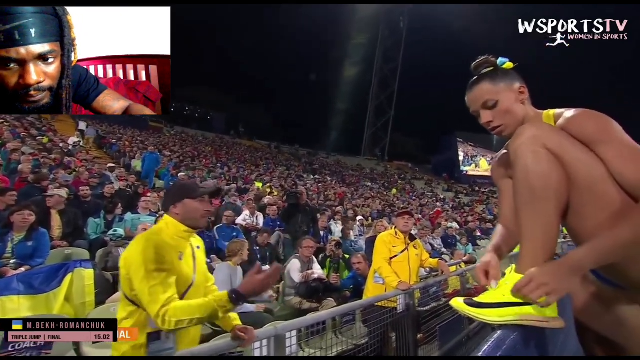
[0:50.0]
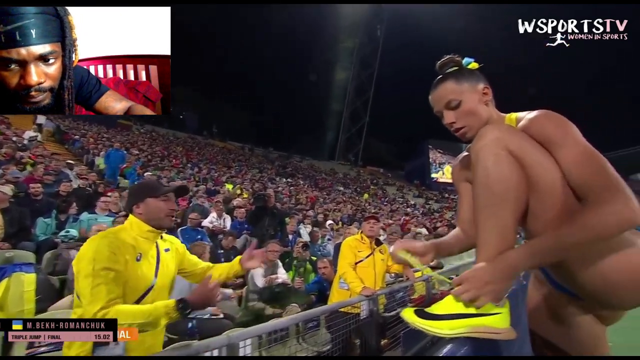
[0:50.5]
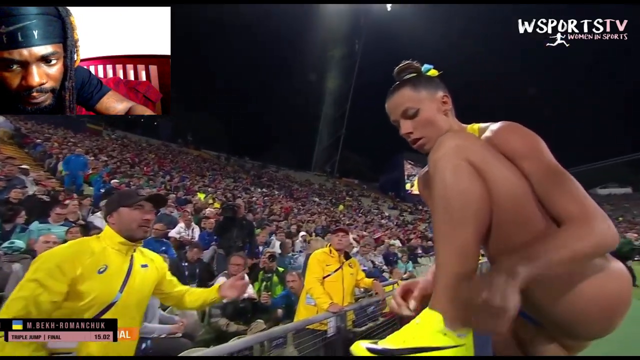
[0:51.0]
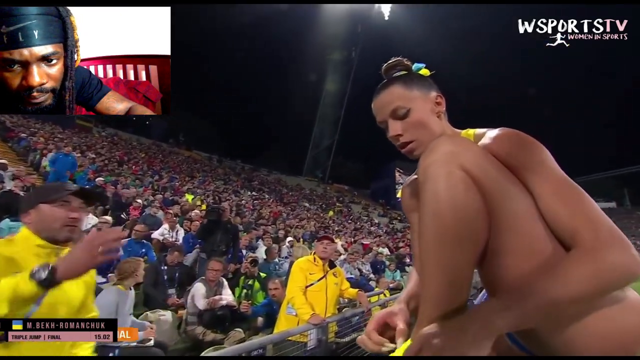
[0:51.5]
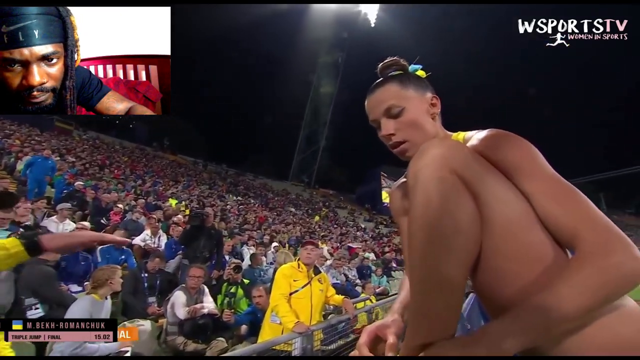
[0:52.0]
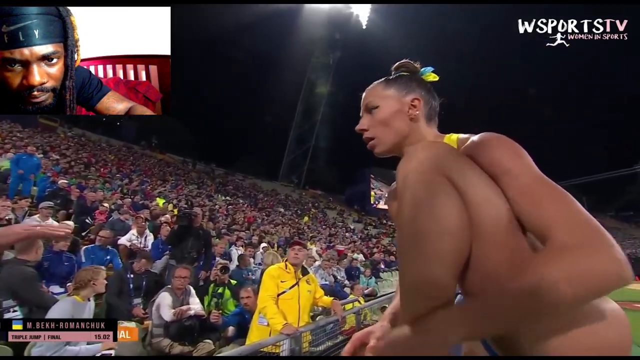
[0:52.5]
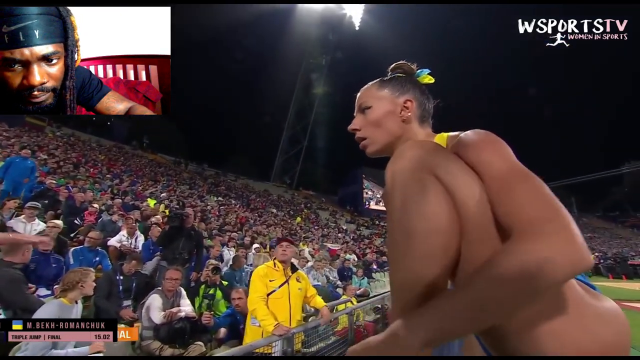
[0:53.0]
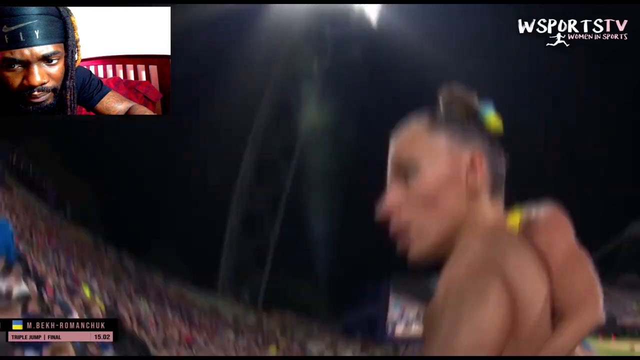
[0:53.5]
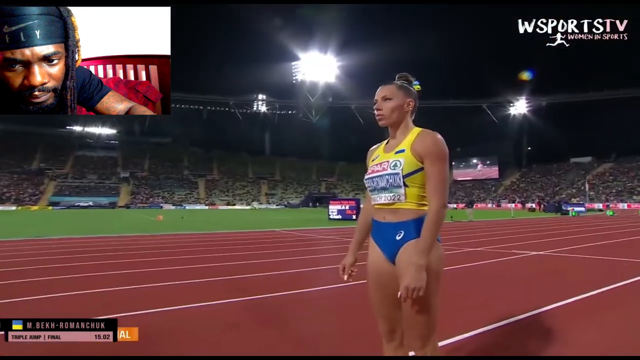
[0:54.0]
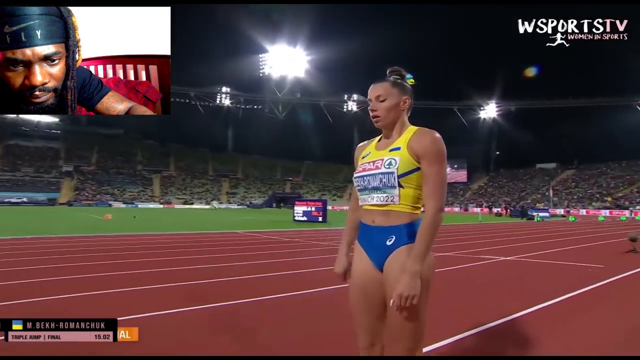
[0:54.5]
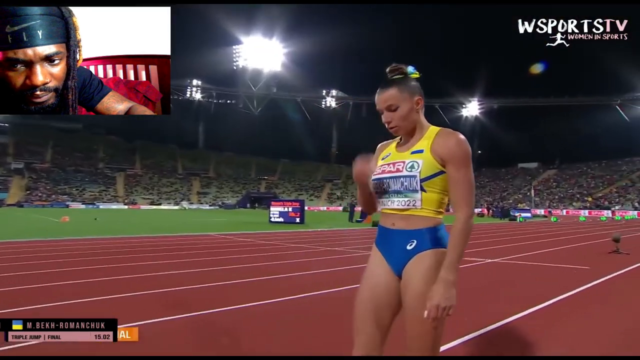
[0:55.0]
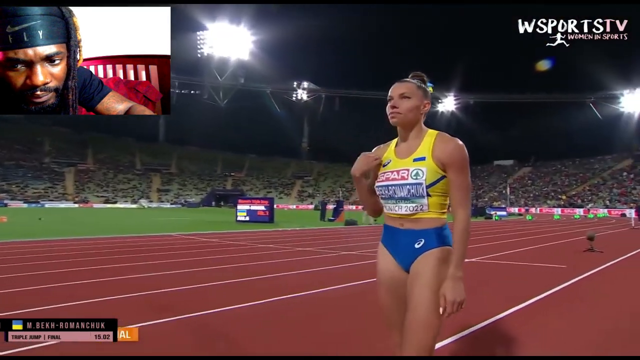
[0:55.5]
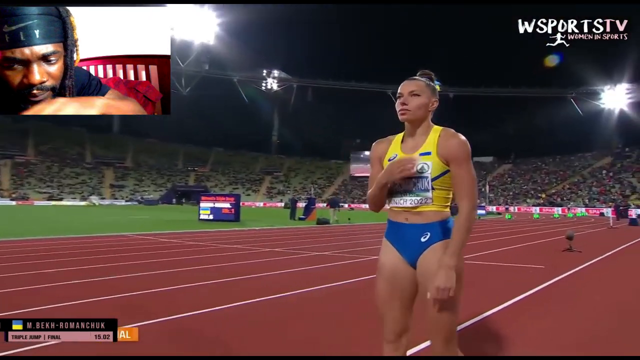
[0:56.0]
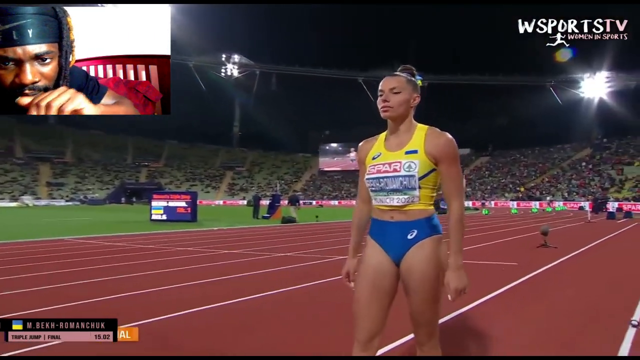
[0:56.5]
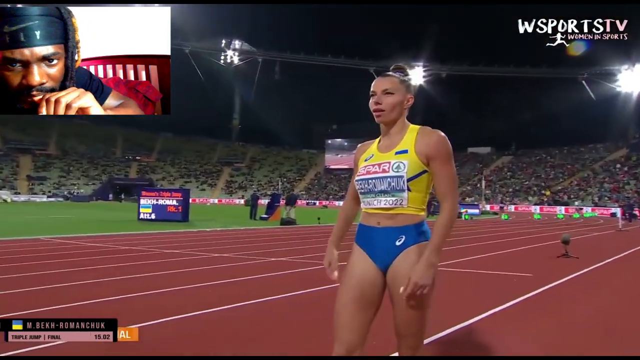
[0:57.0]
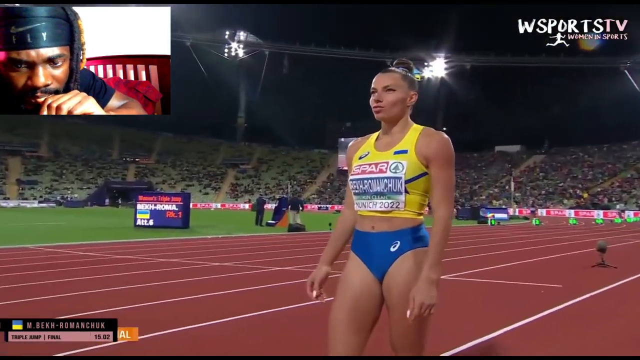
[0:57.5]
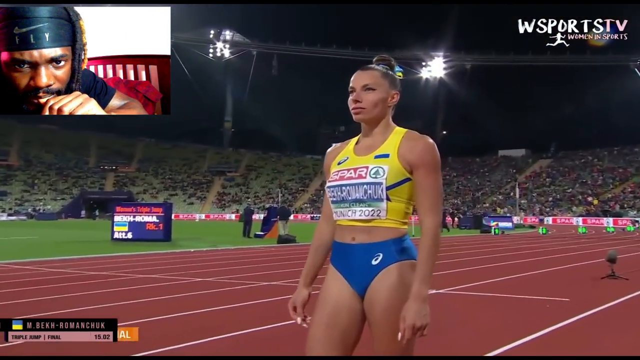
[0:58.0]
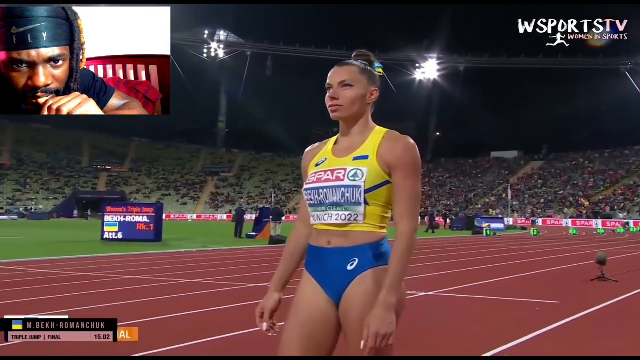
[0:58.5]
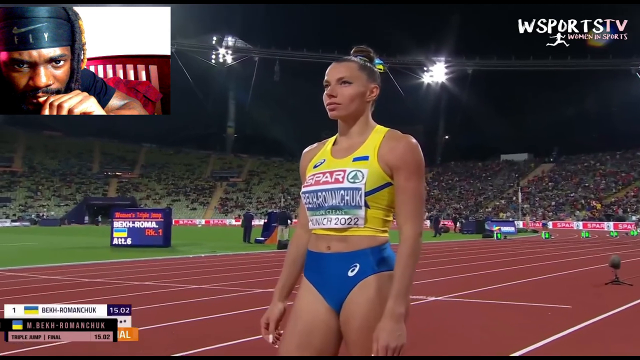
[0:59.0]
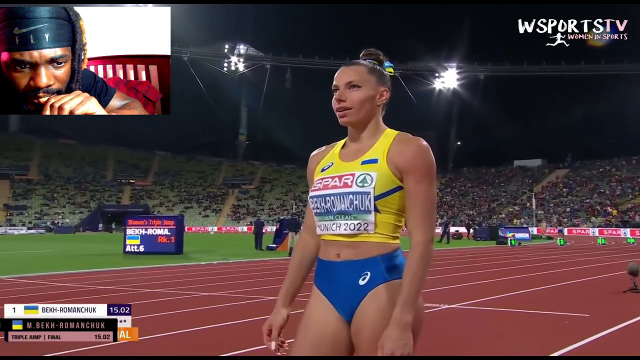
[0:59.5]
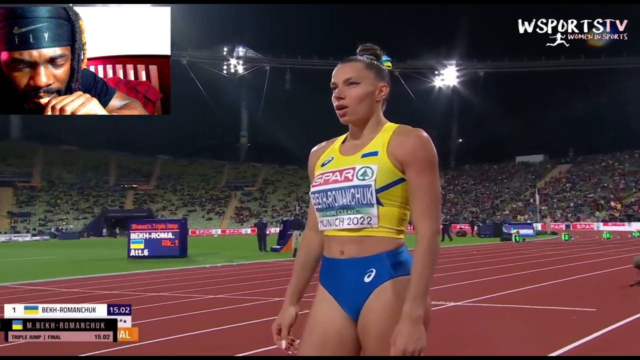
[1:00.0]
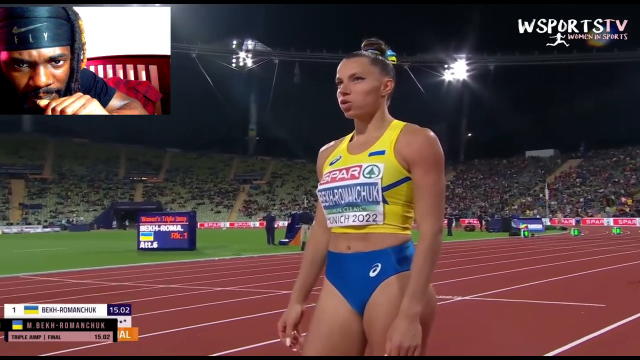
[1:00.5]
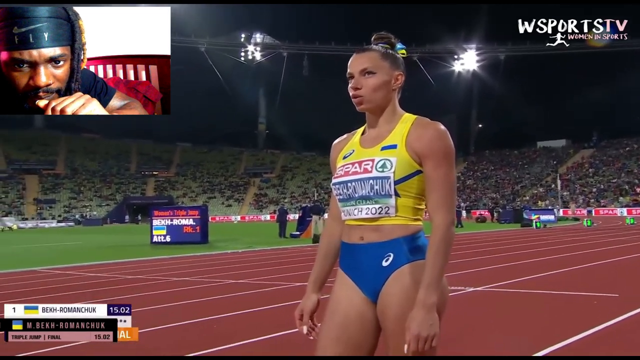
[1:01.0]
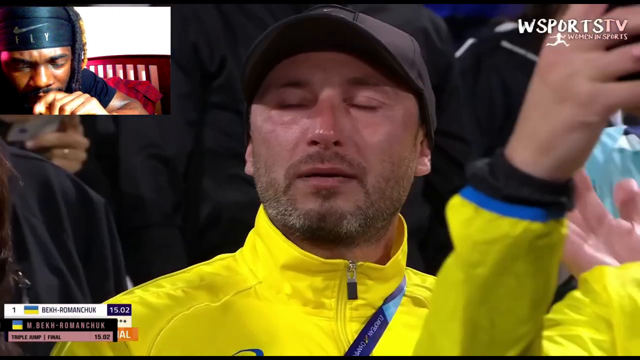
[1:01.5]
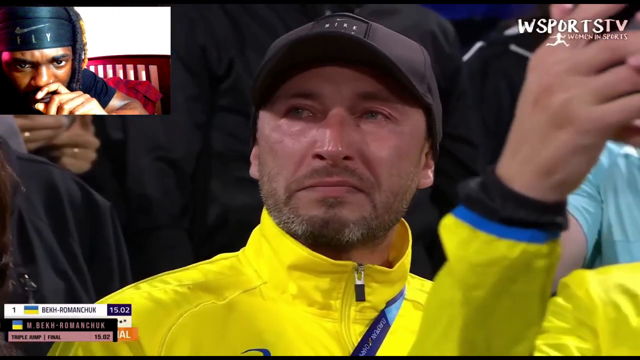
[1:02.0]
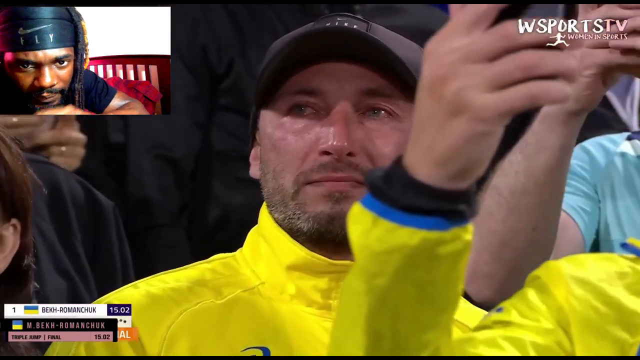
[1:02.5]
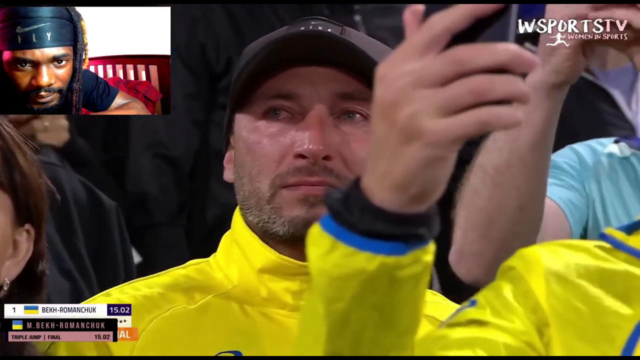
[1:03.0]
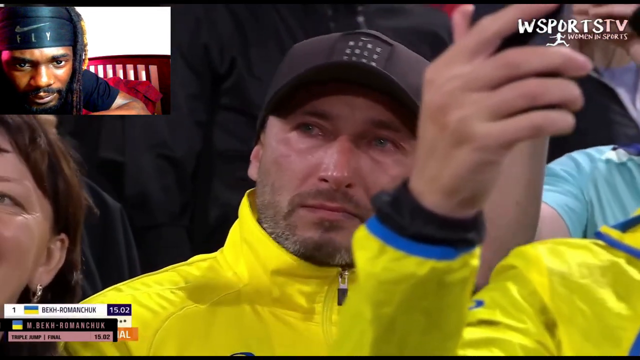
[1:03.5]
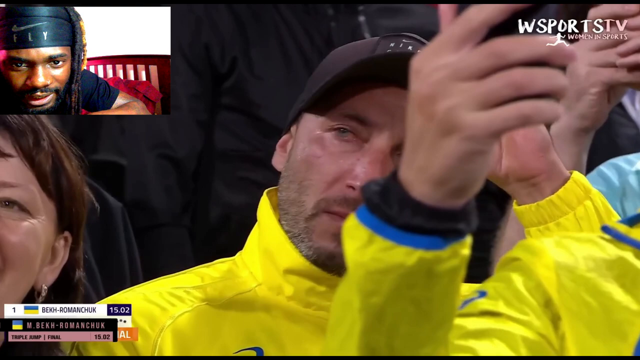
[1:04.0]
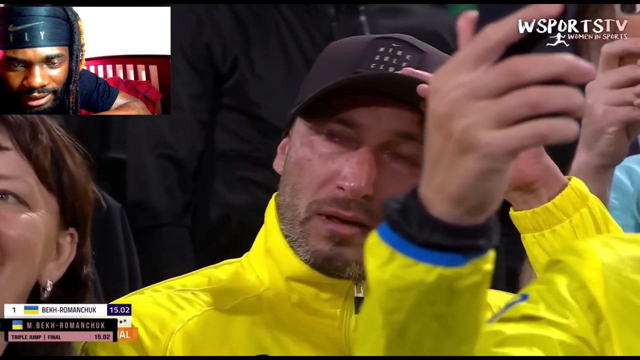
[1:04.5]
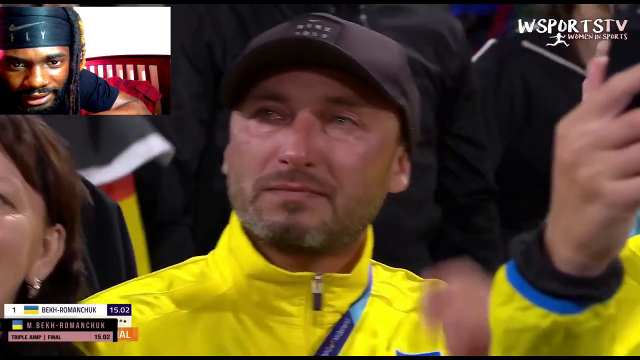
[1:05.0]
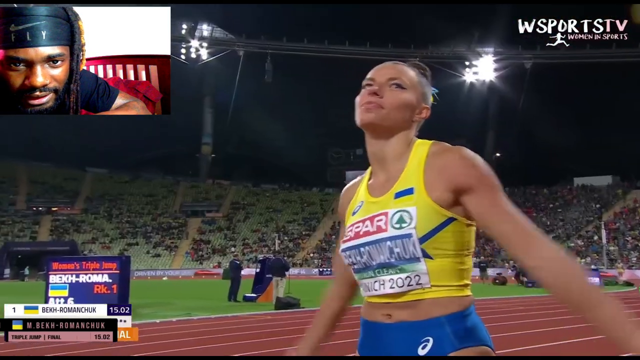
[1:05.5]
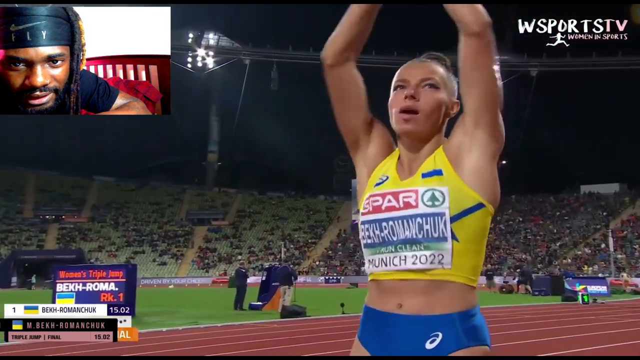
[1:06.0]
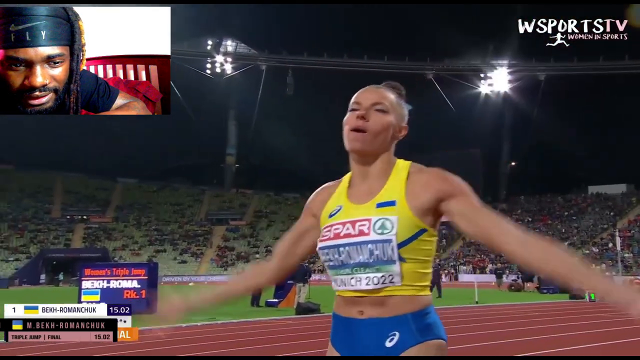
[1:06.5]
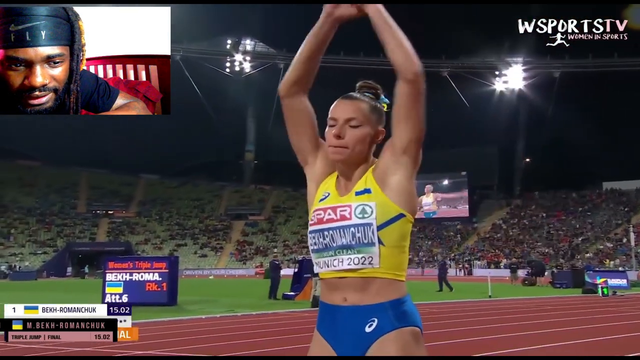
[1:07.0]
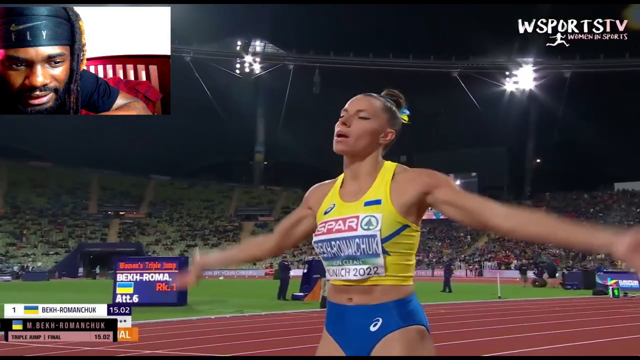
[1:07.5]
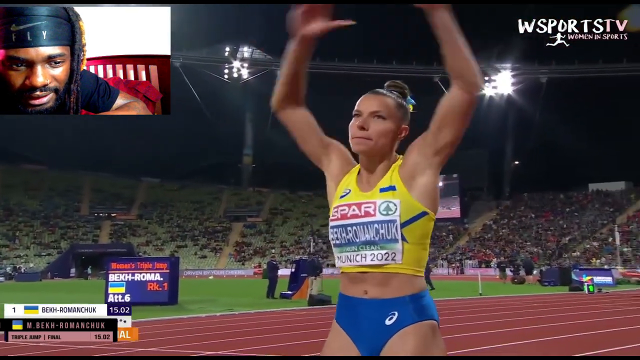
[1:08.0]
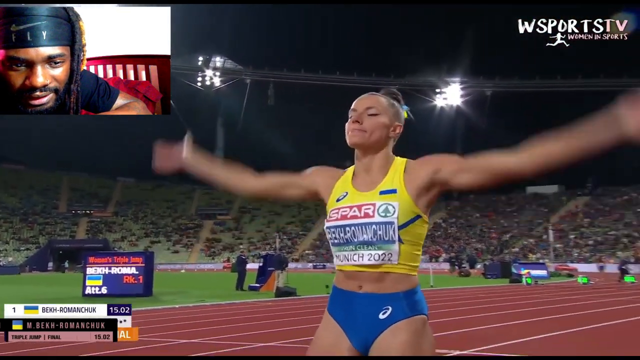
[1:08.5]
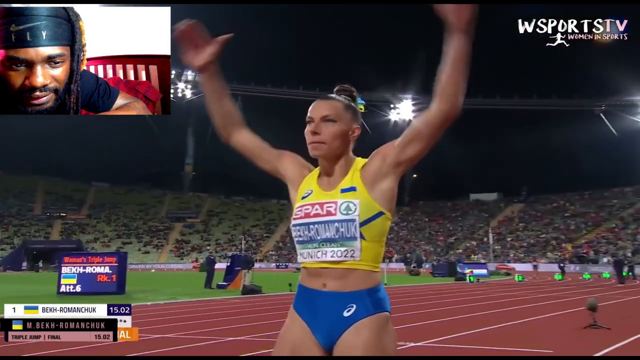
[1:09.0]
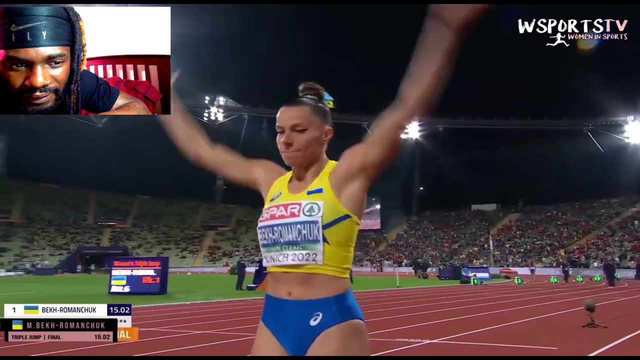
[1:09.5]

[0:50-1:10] She keeps tying her shoes and listening to her coach. She then prepares to try again, first saying a little prayer and then breathing in and out. A close-up shows the coach crying a little. She raises her arms and claps to get the crowd to clap along. Meanwhile, the man in the top left corner does not do much; he just watches very closely and does not appear to have said anything since the video began.